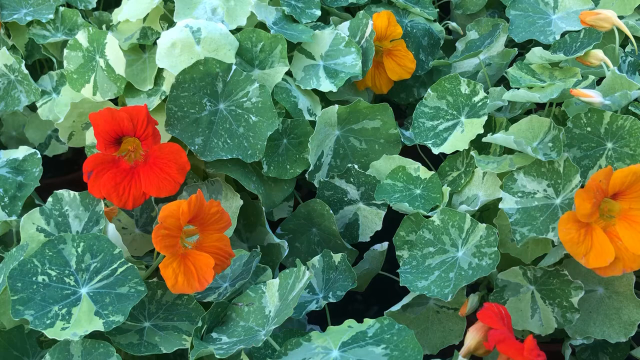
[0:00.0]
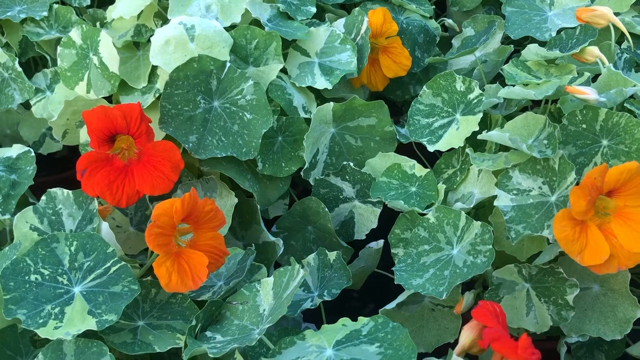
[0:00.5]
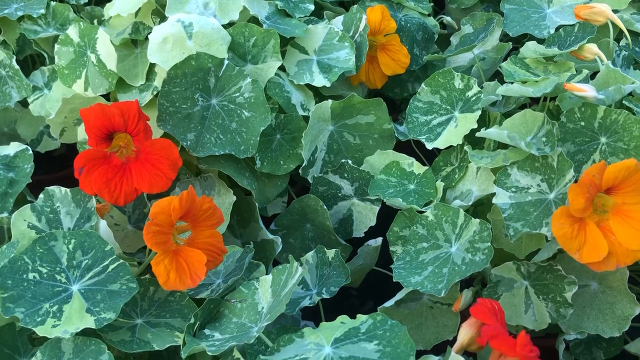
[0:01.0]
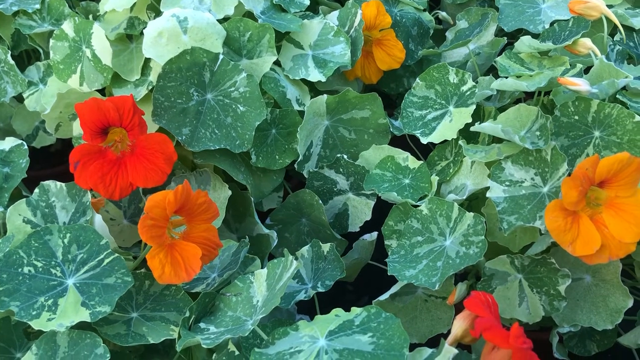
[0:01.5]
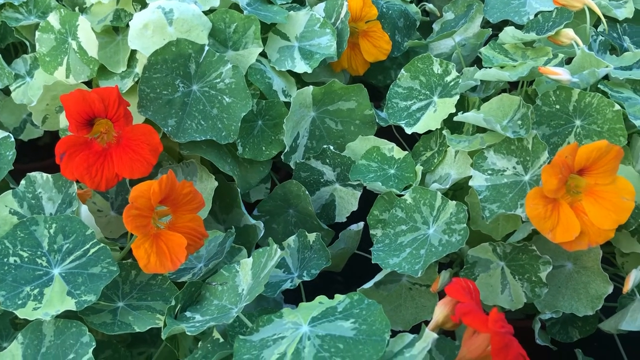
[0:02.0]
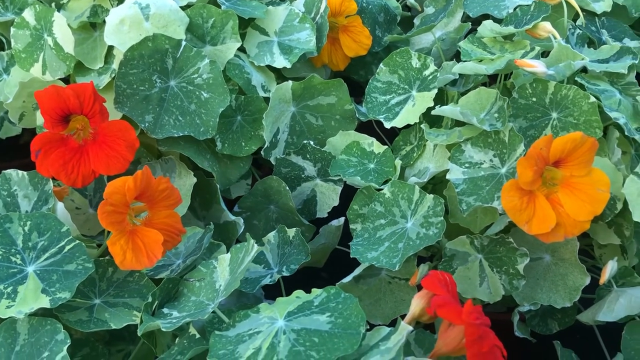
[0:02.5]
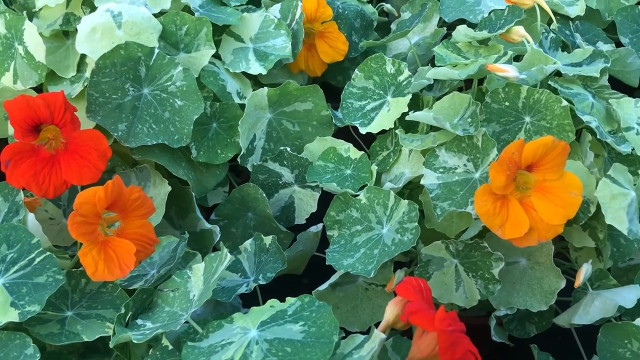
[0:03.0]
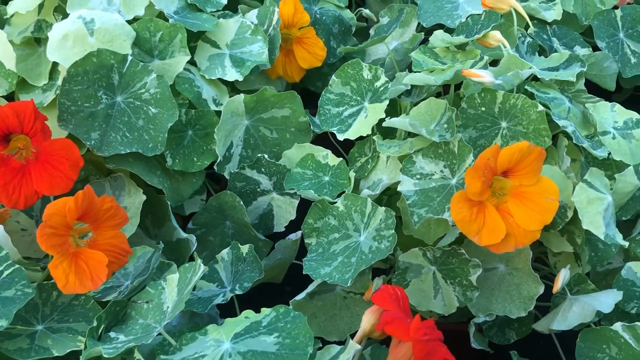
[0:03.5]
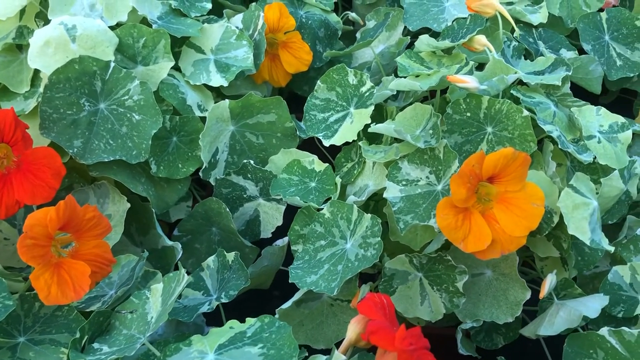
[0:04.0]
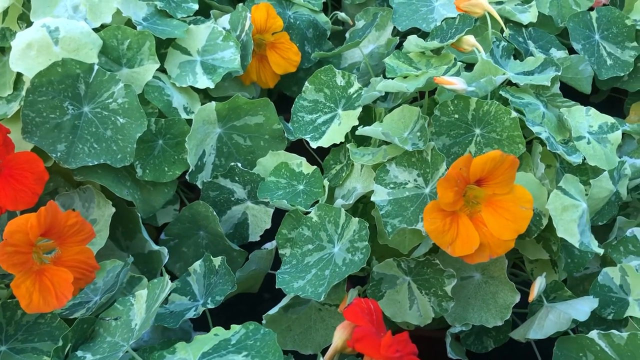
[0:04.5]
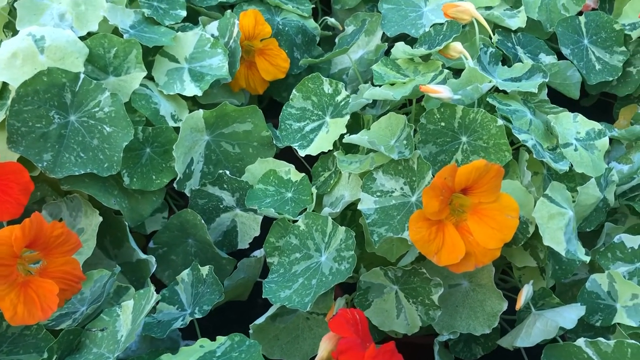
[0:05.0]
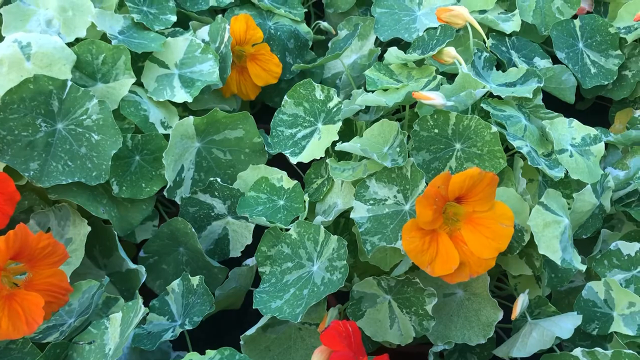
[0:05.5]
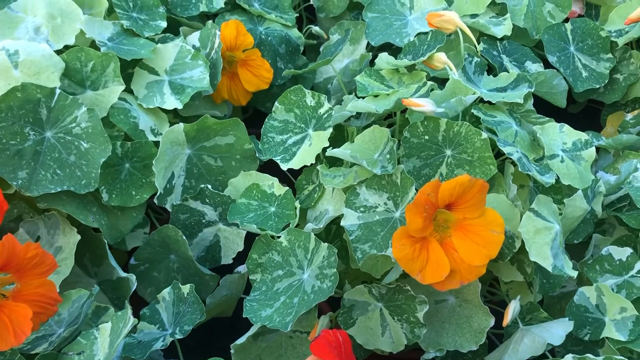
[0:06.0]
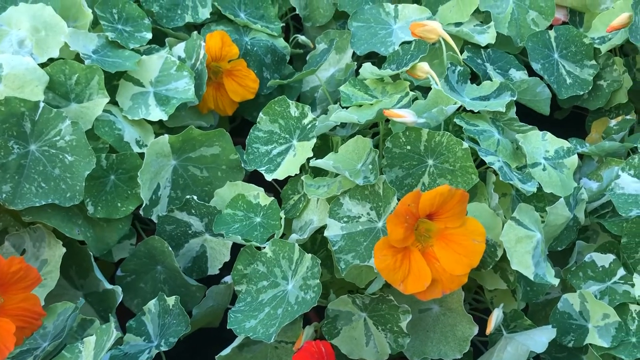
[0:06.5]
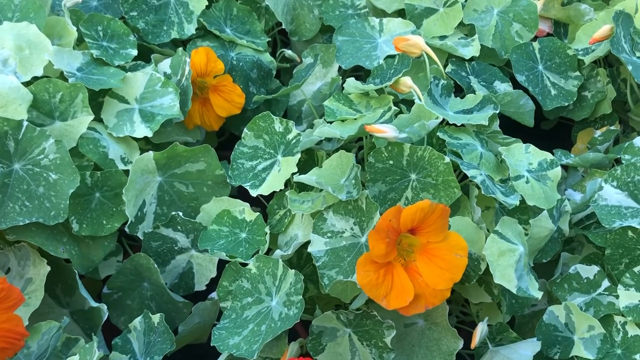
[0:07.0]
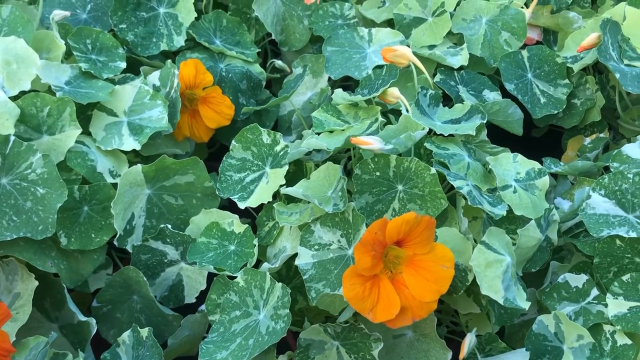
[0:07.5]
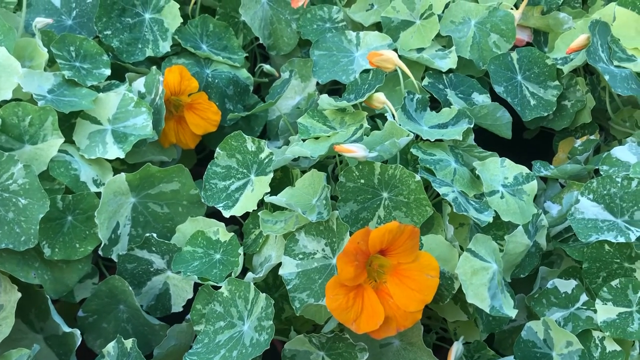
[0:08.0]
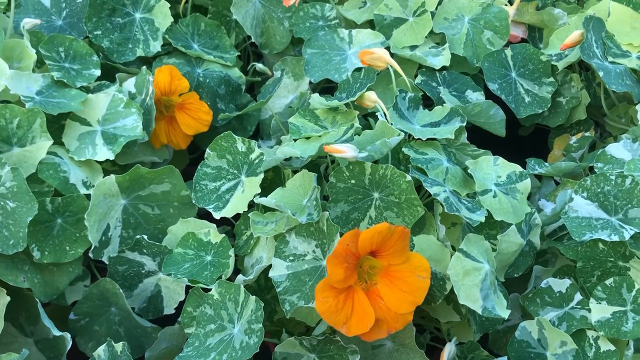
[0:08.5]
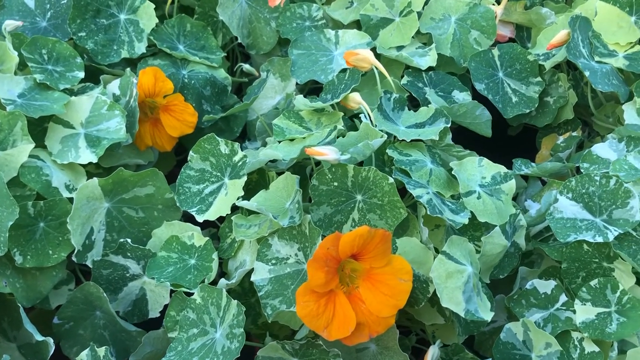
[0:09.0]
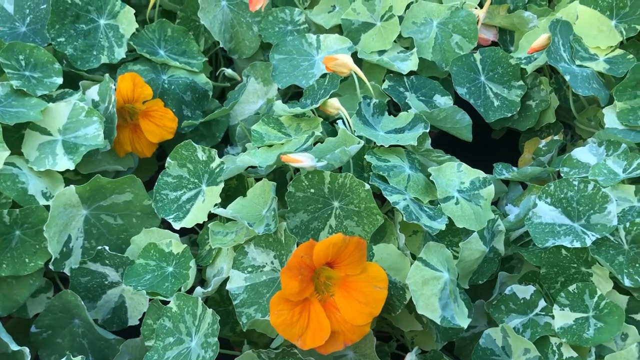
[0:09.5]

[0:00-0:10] Red and orange flowers are surrounded by lots of green leaves. Some of the flowers have bloomed, while on others only the buds are emerging, and most of the emerging buds look orange. The flowers seem to be a bush rather than flowers in a planter. The leaves are green, a dark green with a light green, with lines going through them, and some have little spots of white or light green. The flowers appear to have five petals and look very delicate, as if they would fall apart if touched.